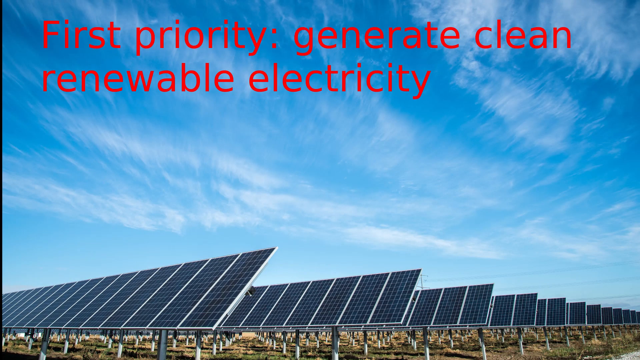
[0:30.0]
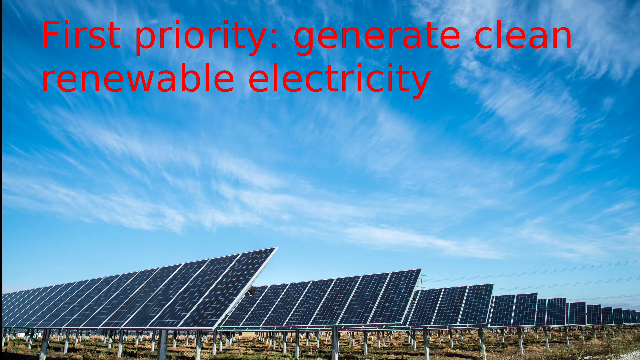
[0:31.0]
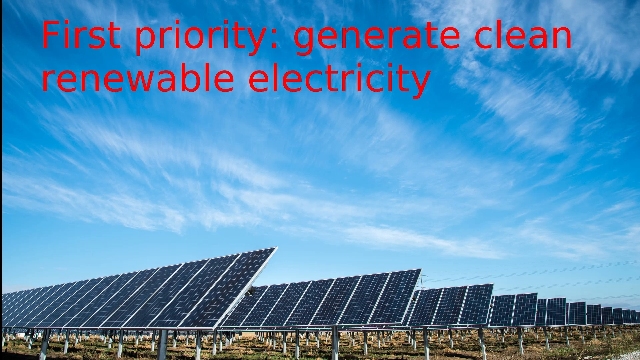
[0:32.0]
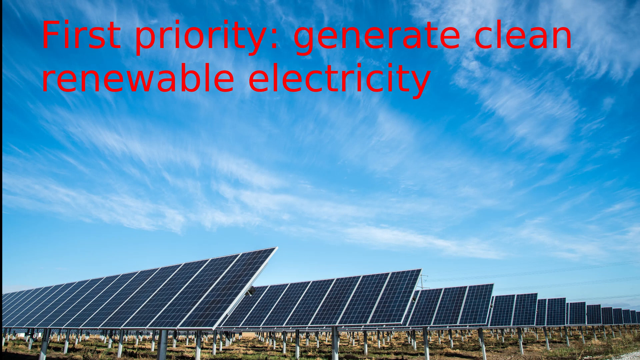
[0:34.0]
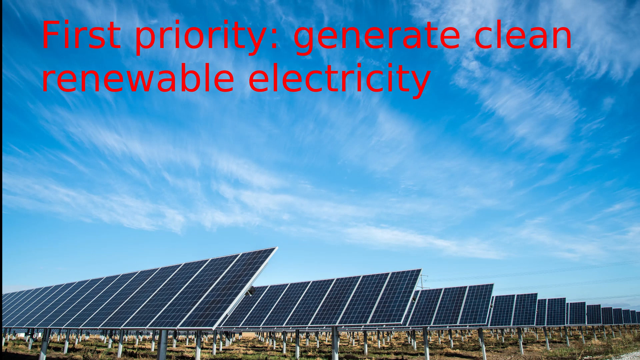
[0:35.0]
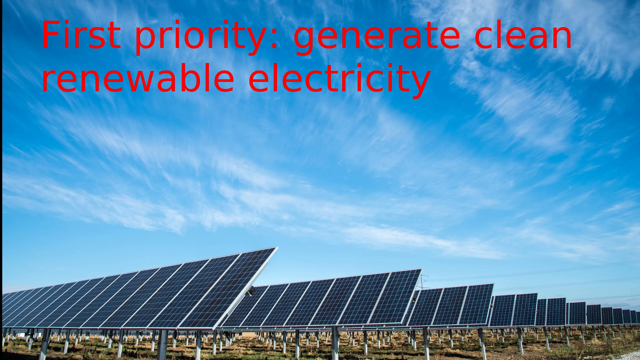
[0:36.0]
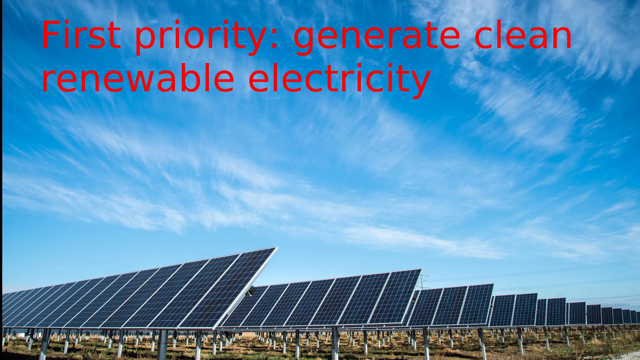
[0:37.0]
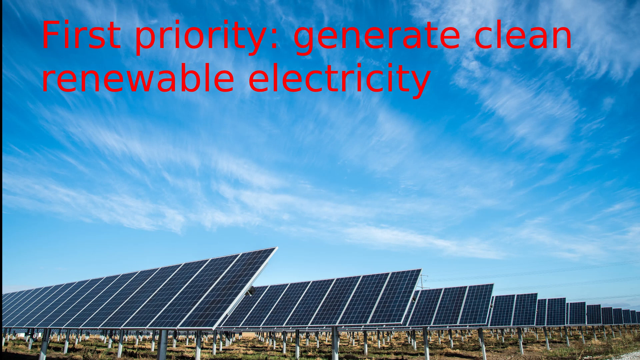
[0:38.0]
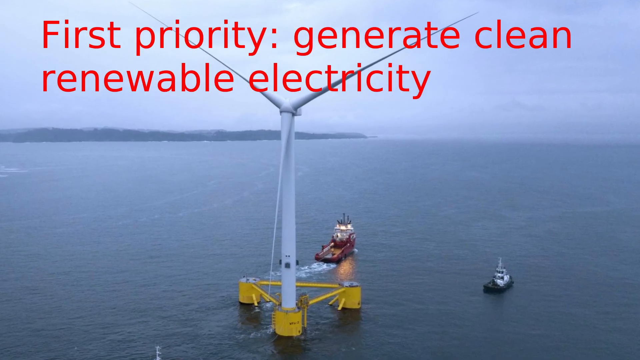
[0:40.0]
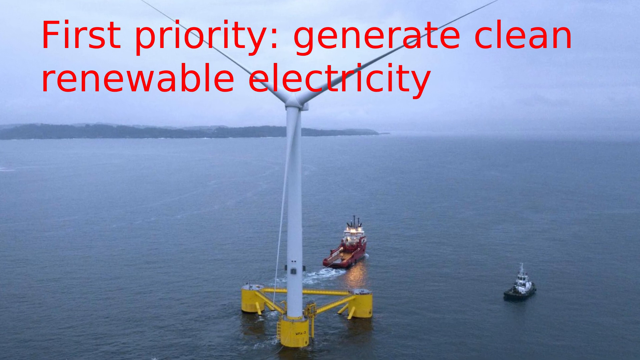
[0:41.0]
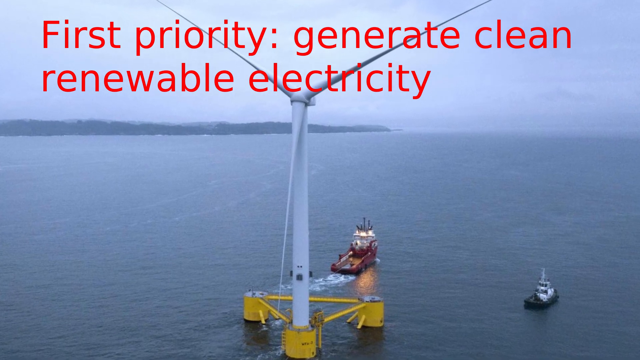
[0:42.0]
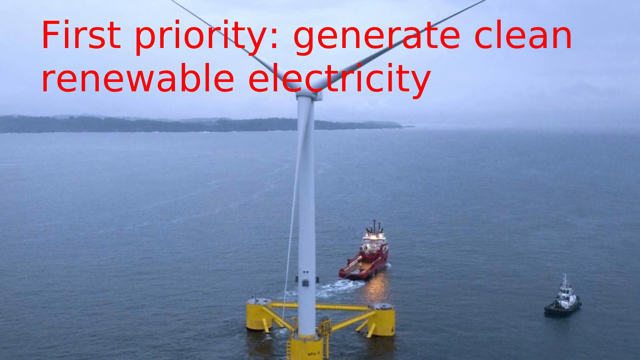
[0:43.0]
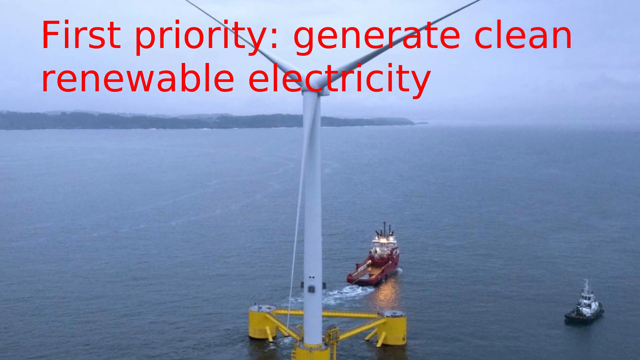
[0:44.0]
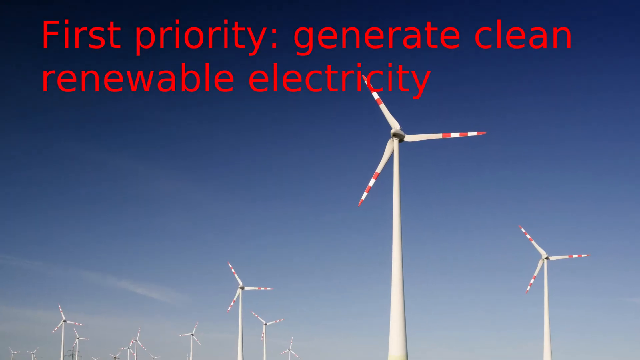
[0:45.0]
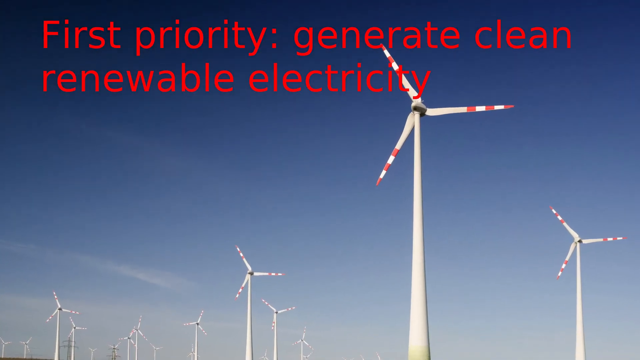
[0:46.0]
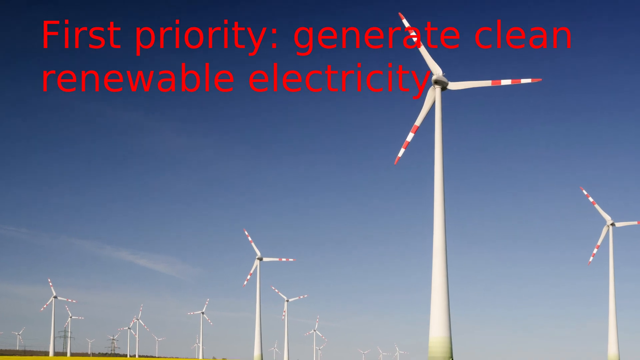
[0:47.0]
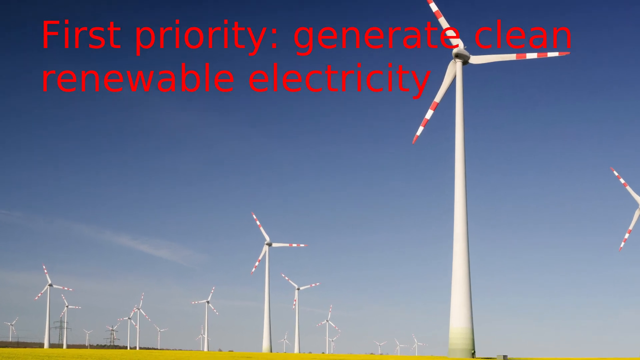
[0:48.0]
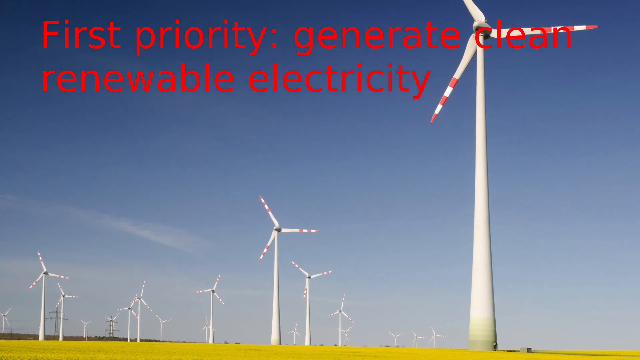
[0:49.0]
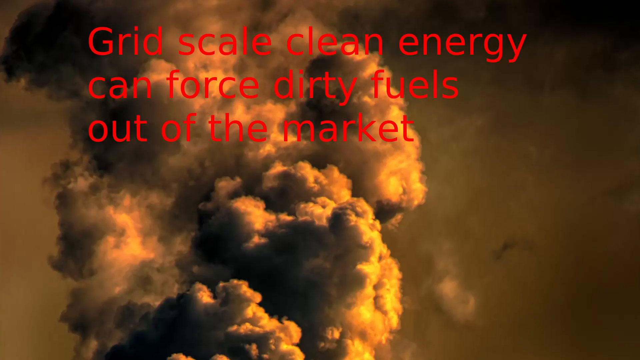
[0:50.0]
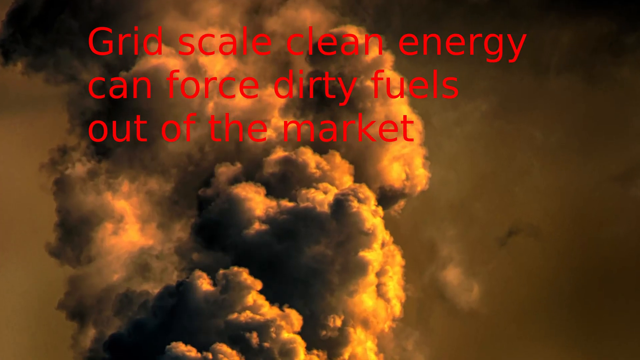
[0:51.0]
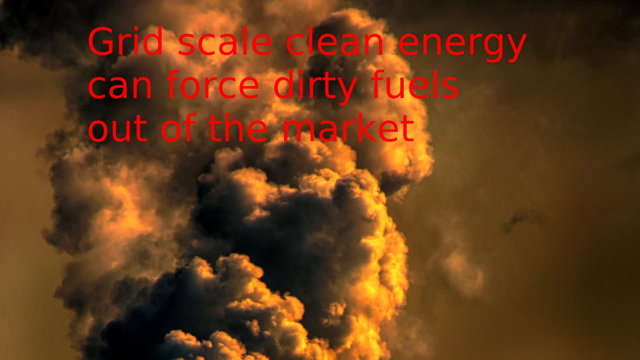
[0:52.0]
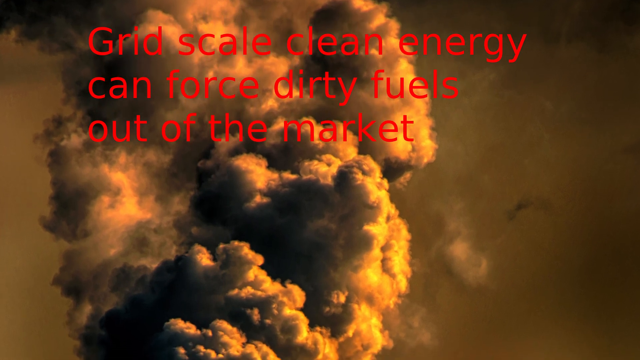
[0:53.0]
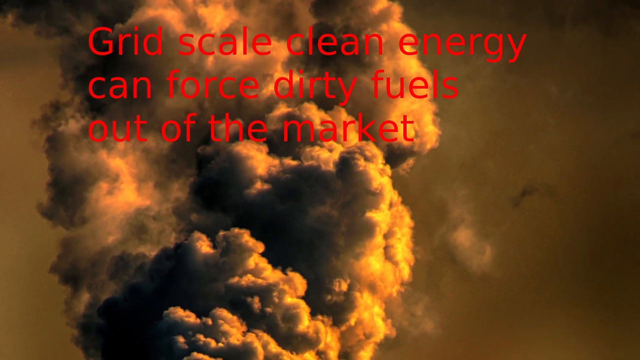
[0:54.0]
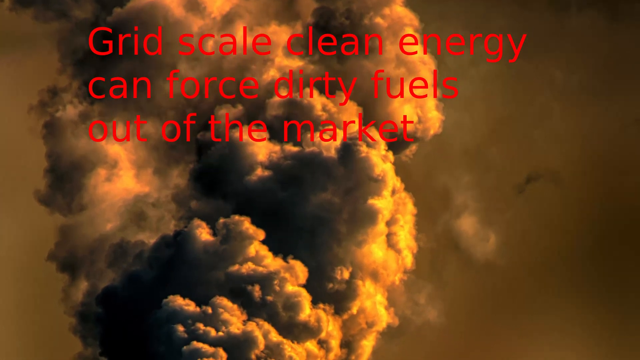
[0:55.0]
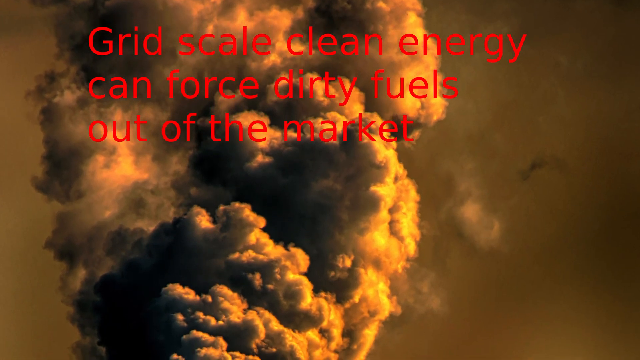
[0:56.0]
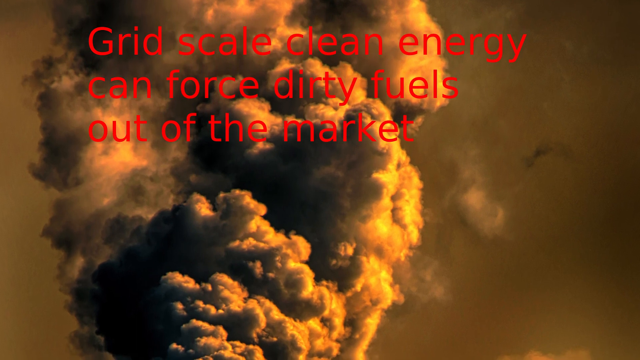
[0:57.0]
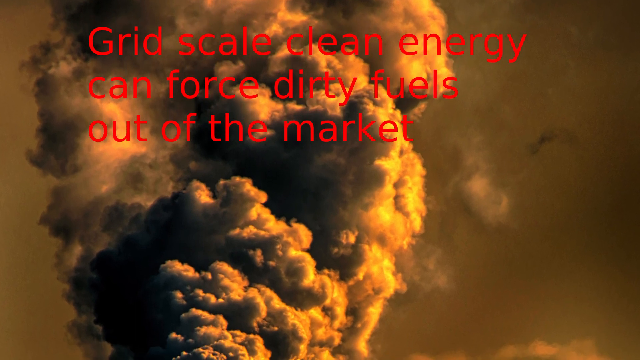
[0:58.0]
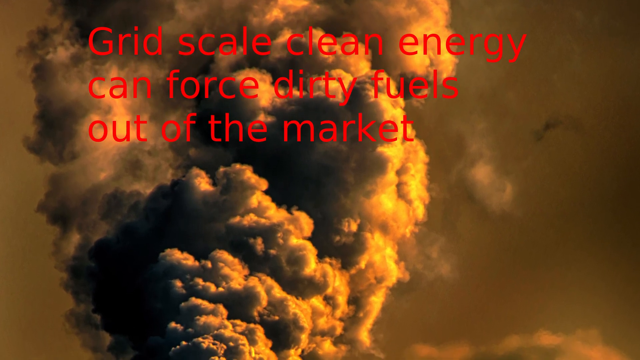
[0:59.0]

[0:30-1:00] The screen stays on for about five seconds before the image changes. The red writing at the top stays the same, but the background image is different: the sea, with a black cliff edge range going horizontally from the top mid-section of the left side to the centre of the screen. A wind turbine in the sea is held up with yellow legs. There are two boats: a black and white one in the bottom right corner of the screen, and a red, yellow and white one in the centre of the bottom half. The image zooms in to the wind turbine, then changes to a blue-to-white ombre screen, with blue at the top, white at the bottom, and hazy black at the very bottom. The red writing is still the same. Wind turbines go up from the bottom of the screen; five are visible, and more turbines appear as the camera pans to the left. The screen changes again to a hazy, smoky, foggy background, and the writing changes to read "grid scale clean energy can force dirty fuels out of the market".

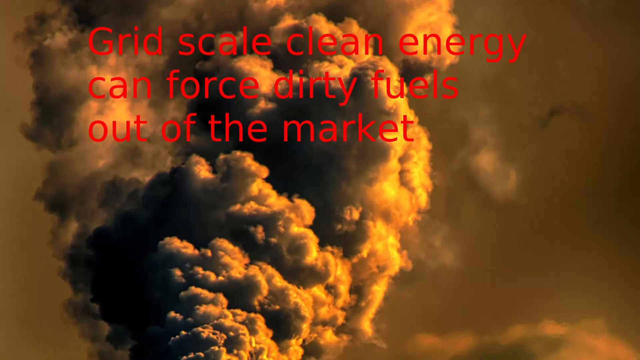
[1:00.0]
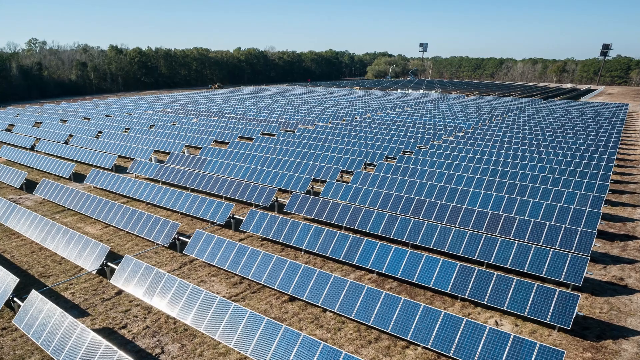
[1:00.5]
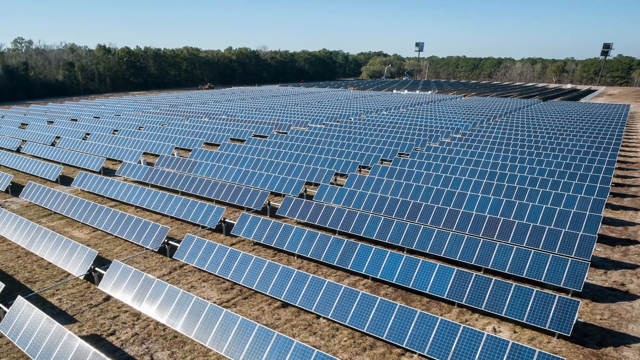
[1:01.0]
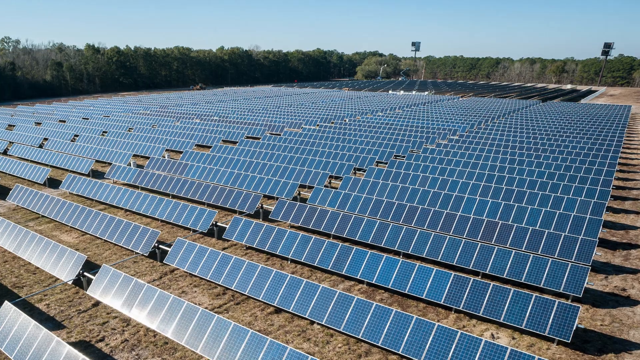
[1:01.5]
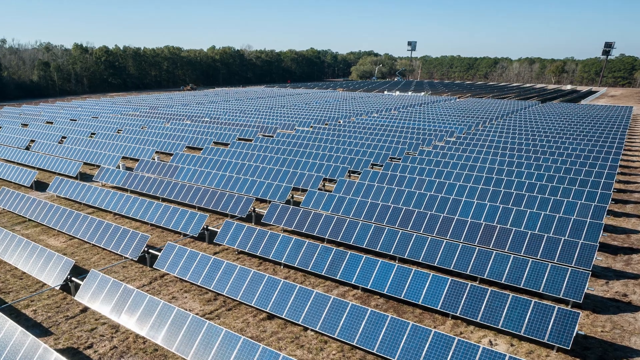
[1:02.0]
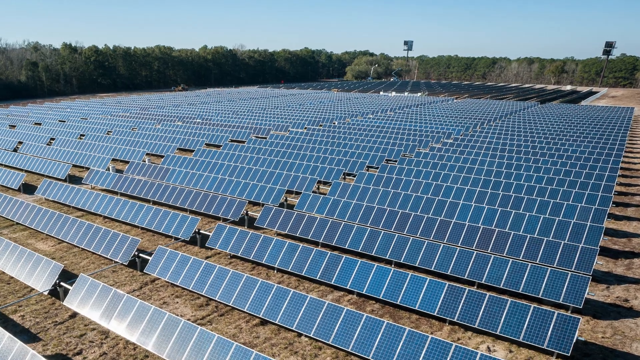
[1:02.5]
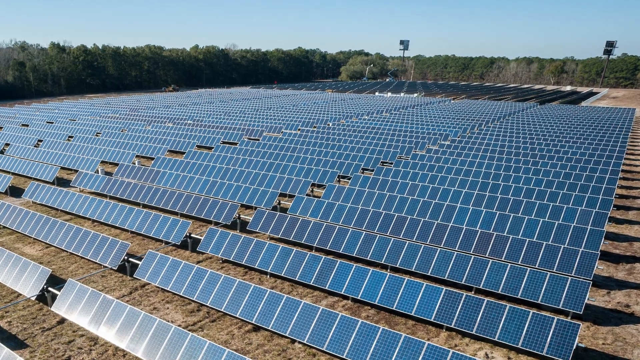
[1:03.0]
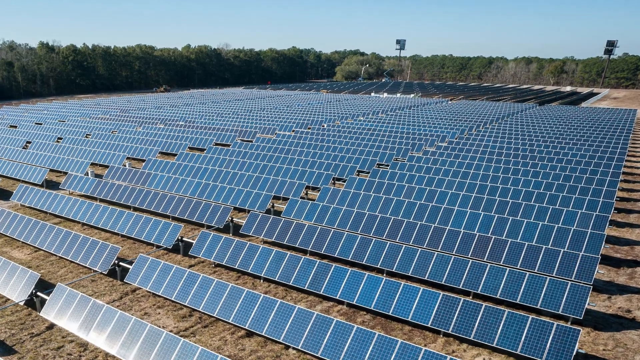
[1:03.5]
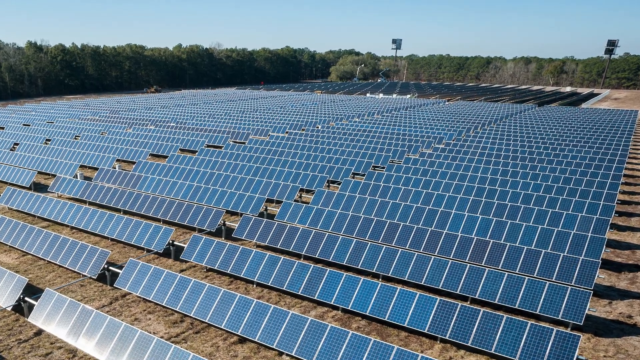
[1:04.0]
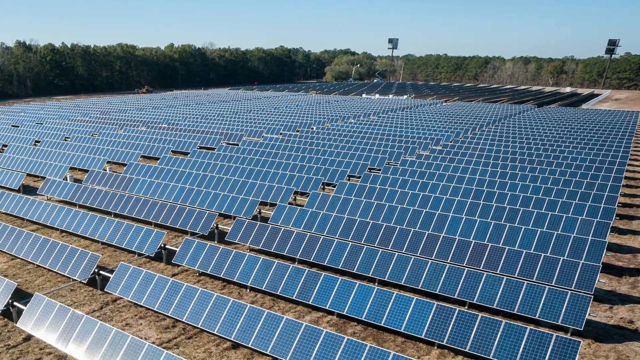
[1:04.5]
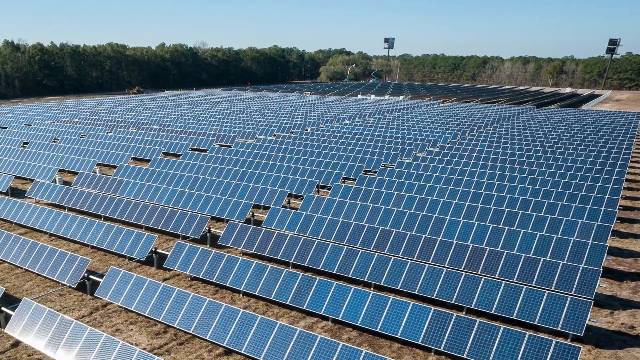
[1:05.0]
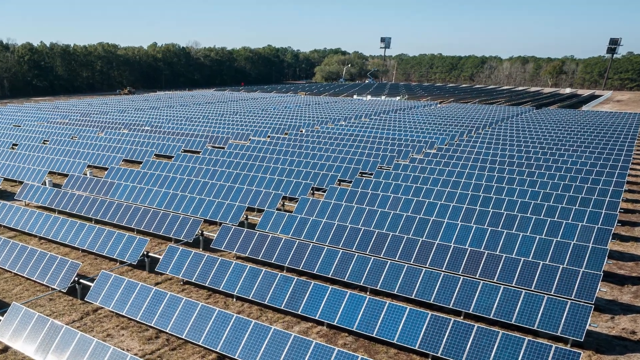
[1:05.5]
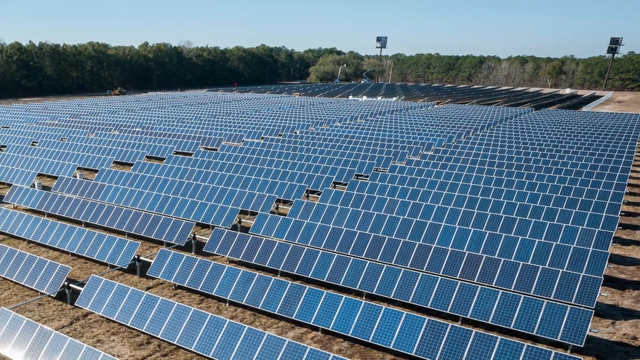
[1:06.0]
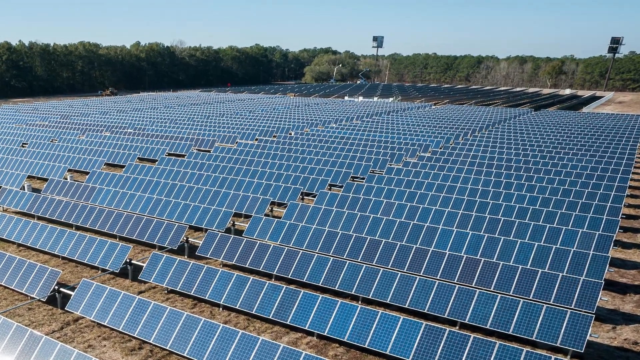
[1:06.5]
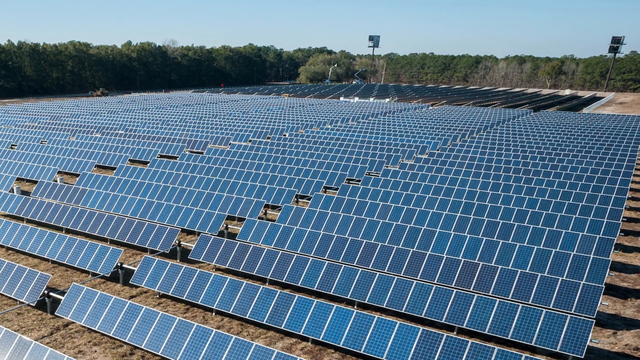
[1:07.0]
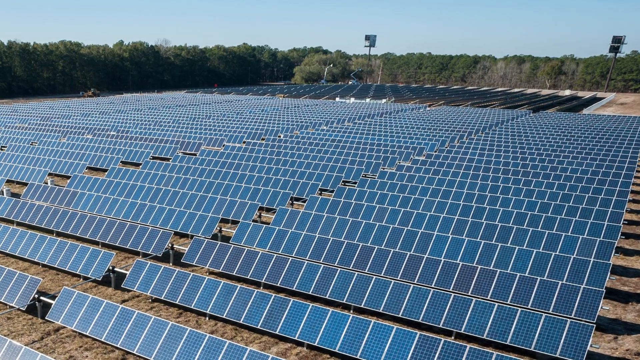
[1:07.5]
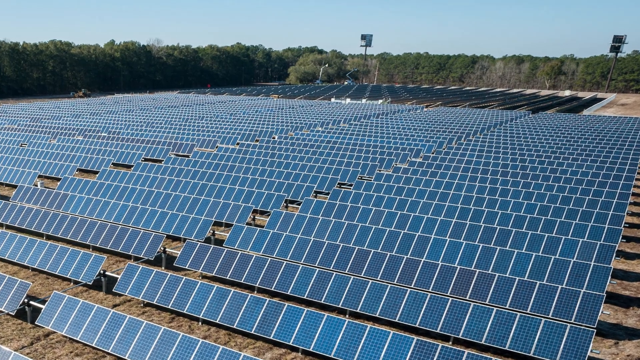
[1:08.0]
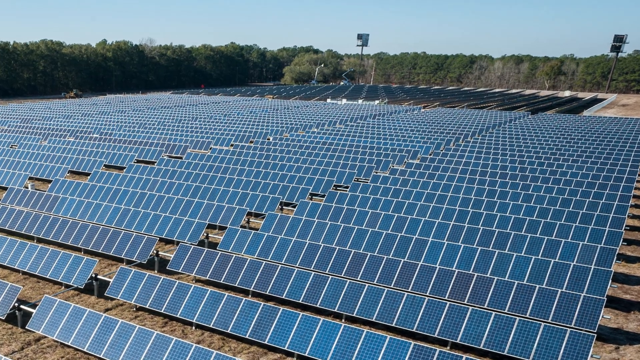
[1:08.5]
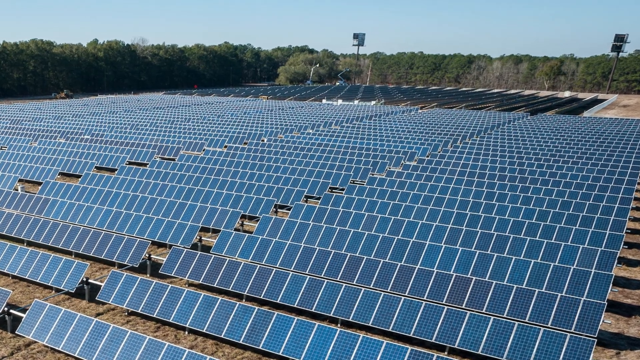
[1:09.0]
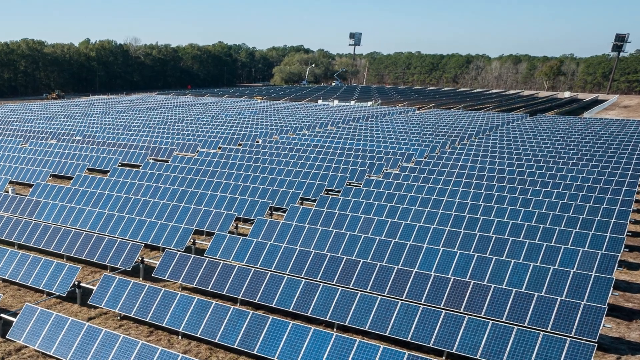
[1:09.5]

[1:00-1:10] Solar panels fill a farmer's-style field that looks about the size of a football pitch, with lots and lots of rows of panels. The camera zooms in towards the back, and the image changes to show the back of the field, where there are two sticks that look like floodlights, one on the right side and one on the left. Trees and bushes surround the edging, with greenery all around the edge, and blue skies above the trees all round.